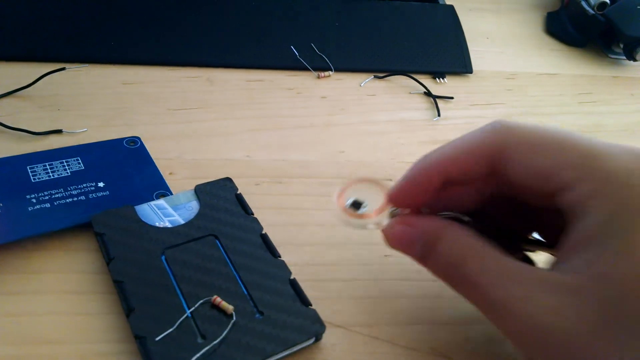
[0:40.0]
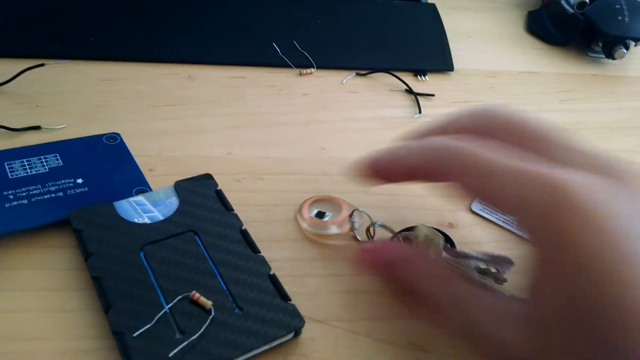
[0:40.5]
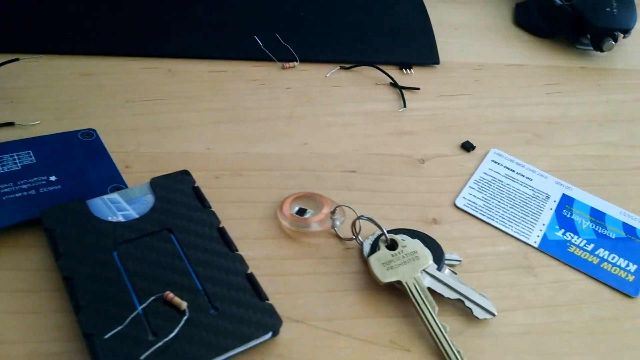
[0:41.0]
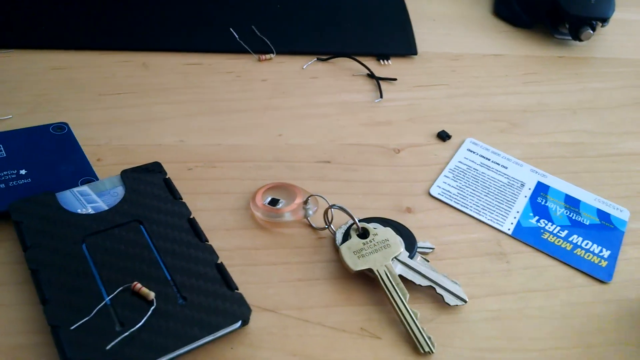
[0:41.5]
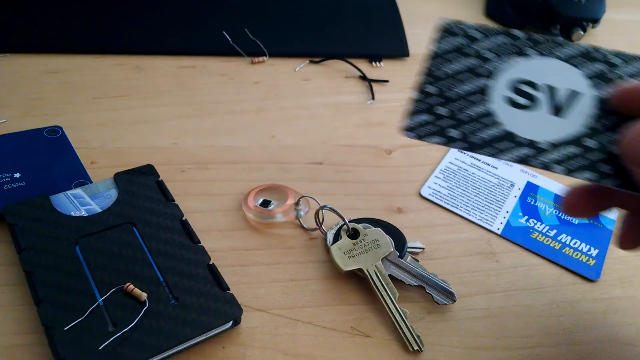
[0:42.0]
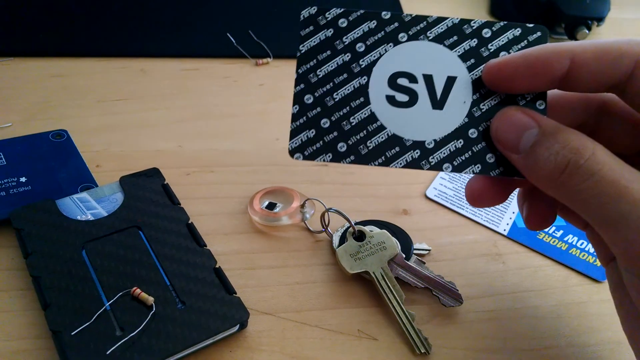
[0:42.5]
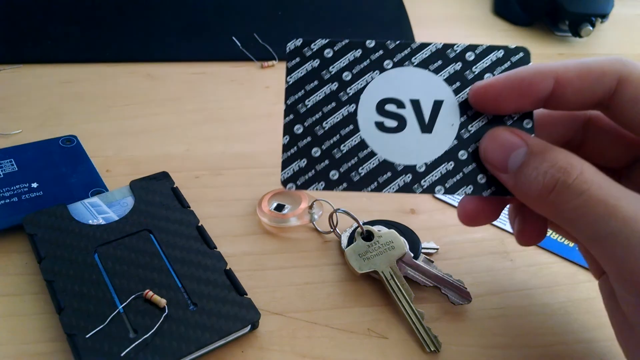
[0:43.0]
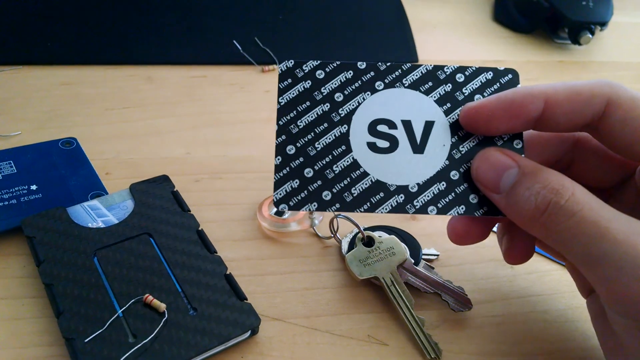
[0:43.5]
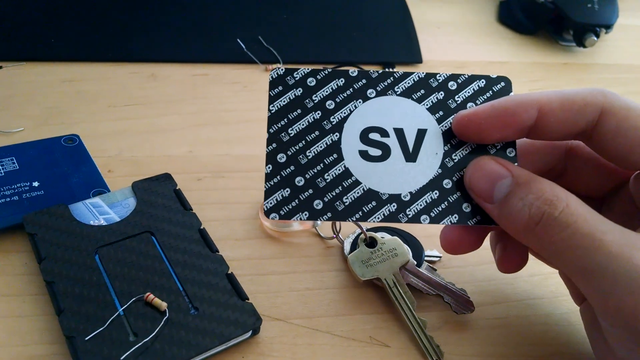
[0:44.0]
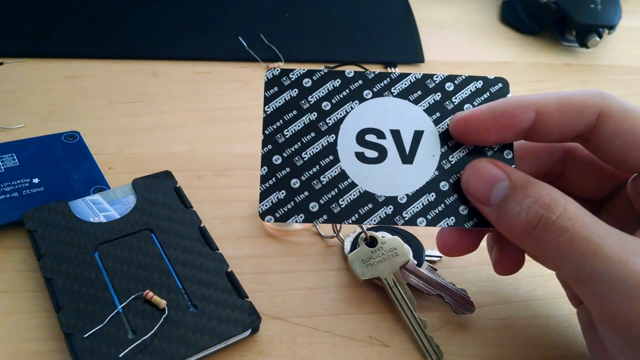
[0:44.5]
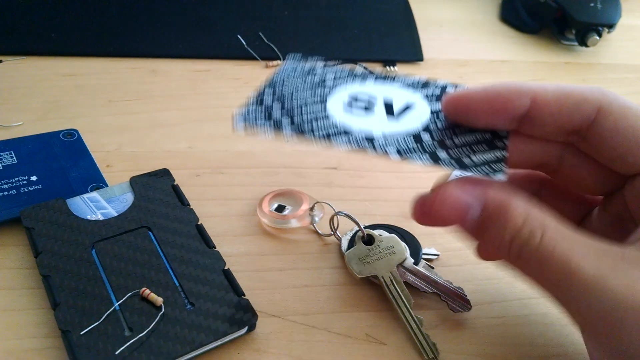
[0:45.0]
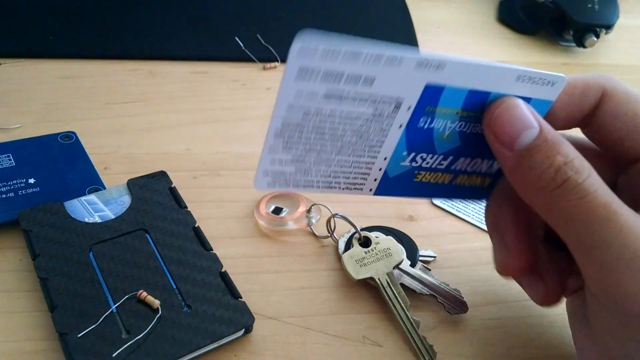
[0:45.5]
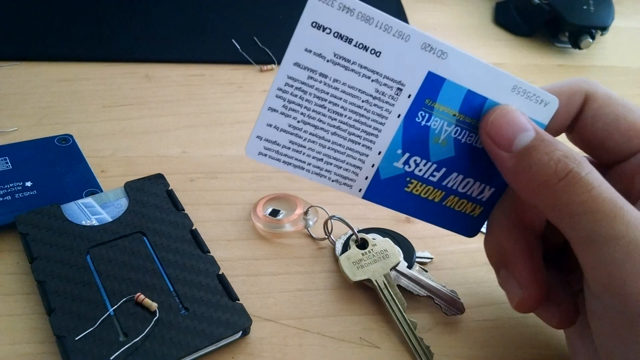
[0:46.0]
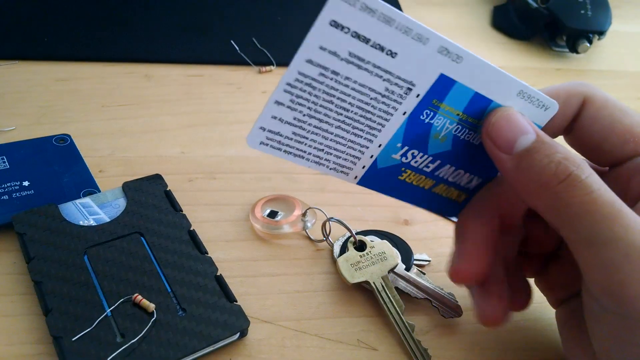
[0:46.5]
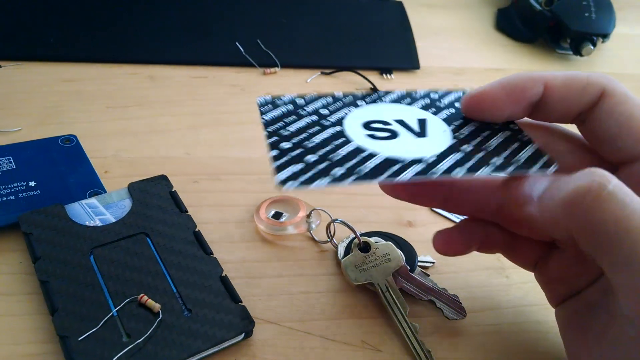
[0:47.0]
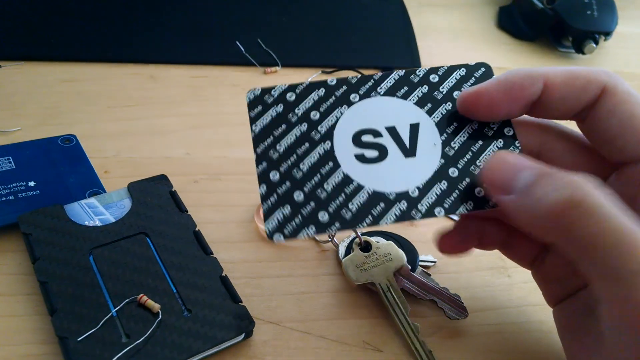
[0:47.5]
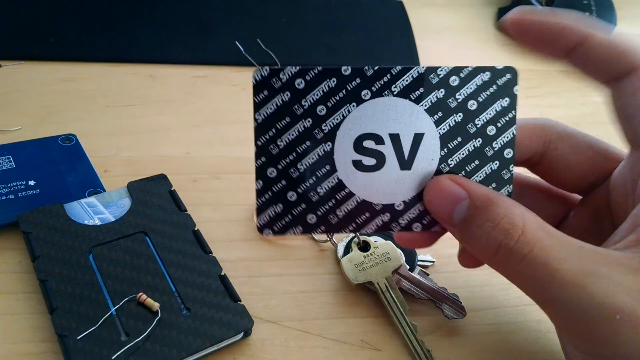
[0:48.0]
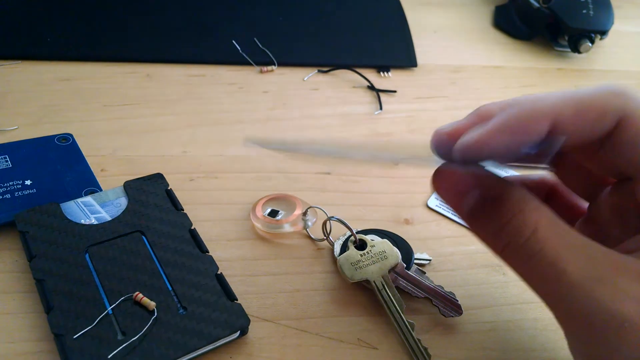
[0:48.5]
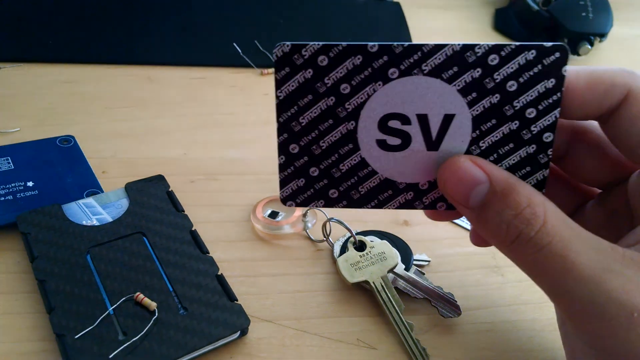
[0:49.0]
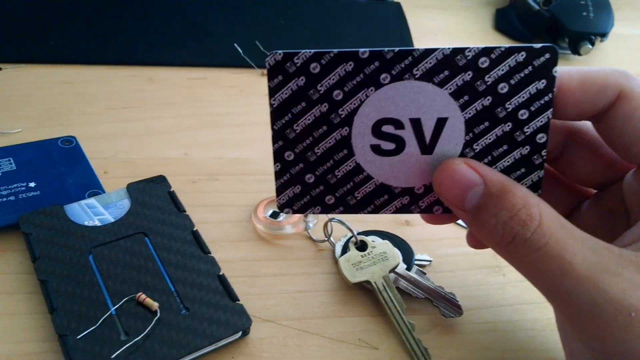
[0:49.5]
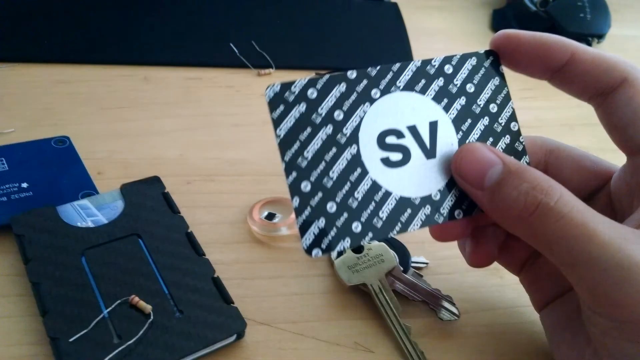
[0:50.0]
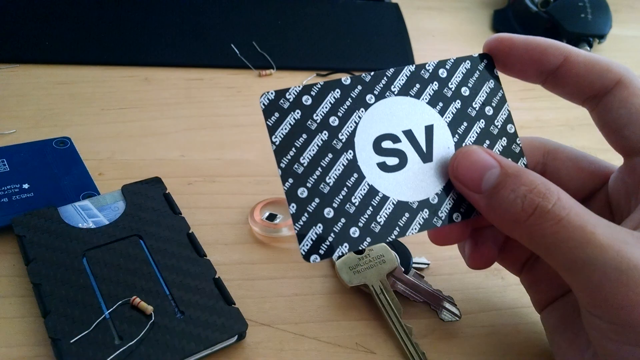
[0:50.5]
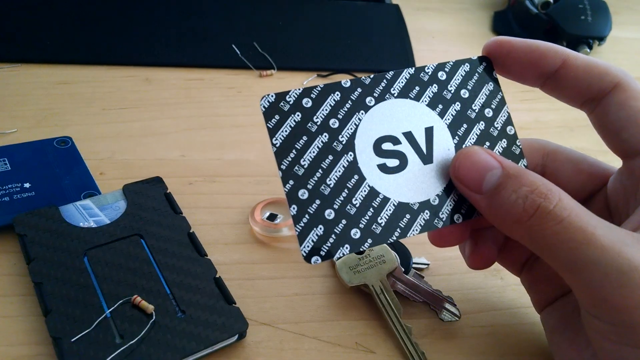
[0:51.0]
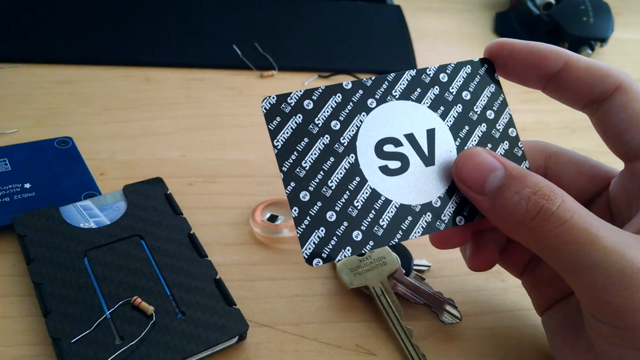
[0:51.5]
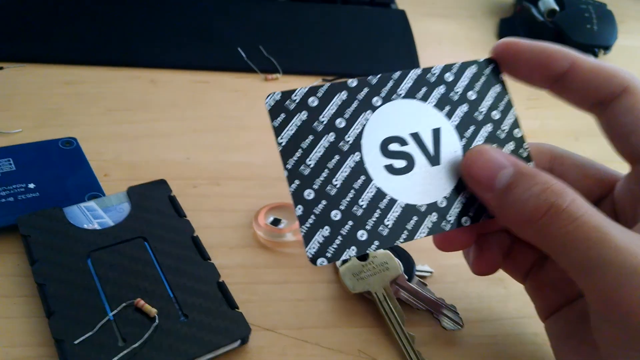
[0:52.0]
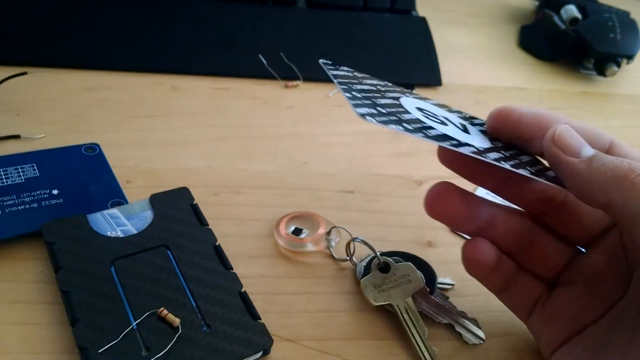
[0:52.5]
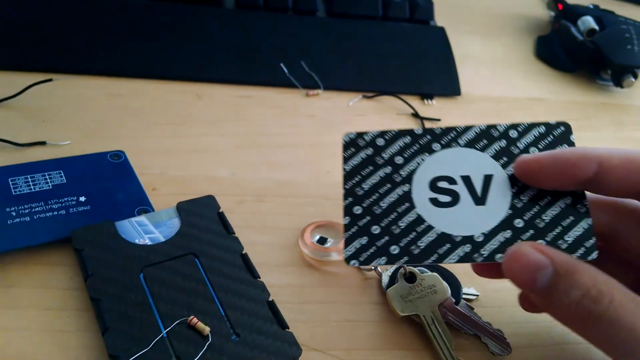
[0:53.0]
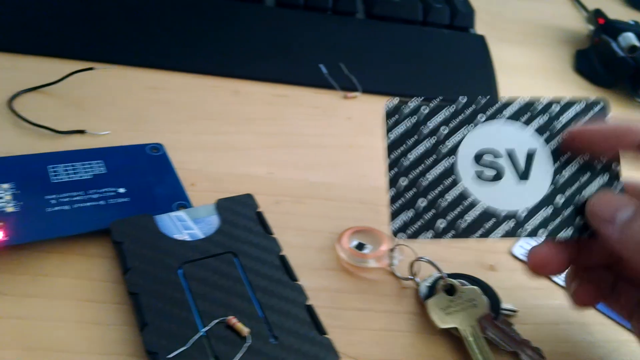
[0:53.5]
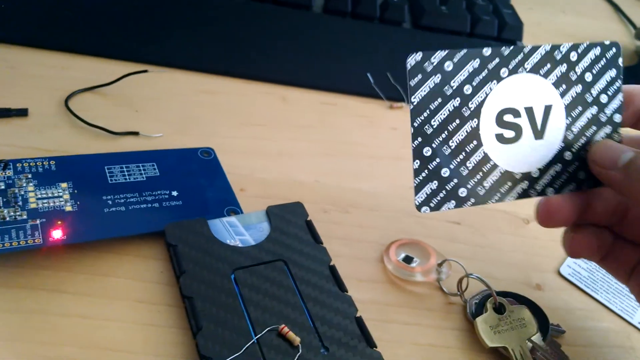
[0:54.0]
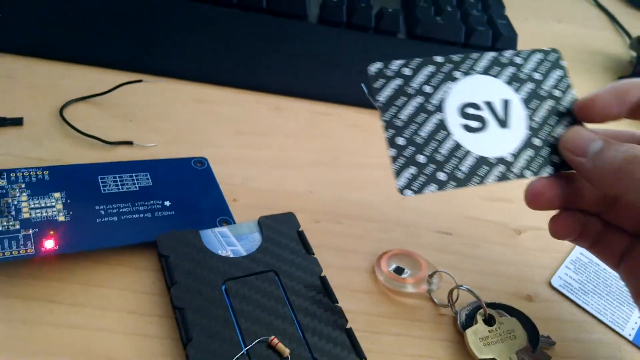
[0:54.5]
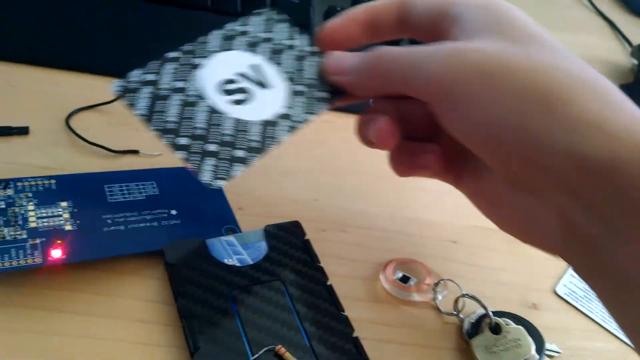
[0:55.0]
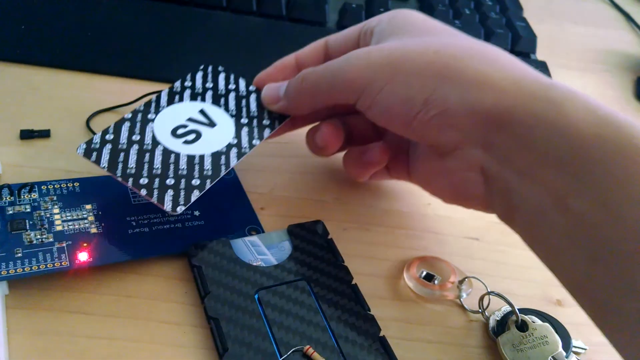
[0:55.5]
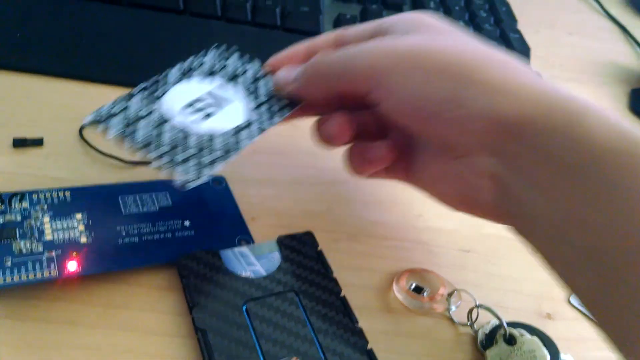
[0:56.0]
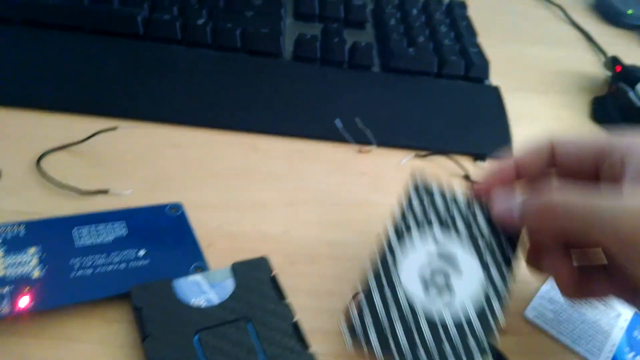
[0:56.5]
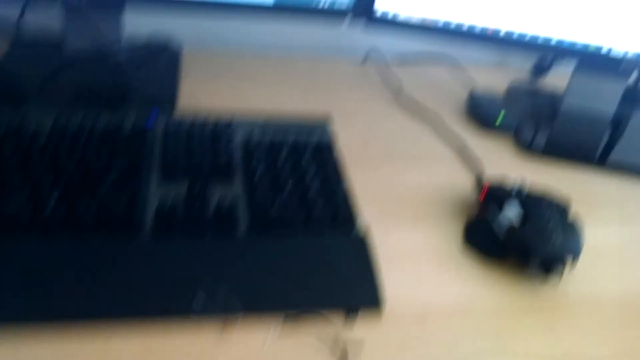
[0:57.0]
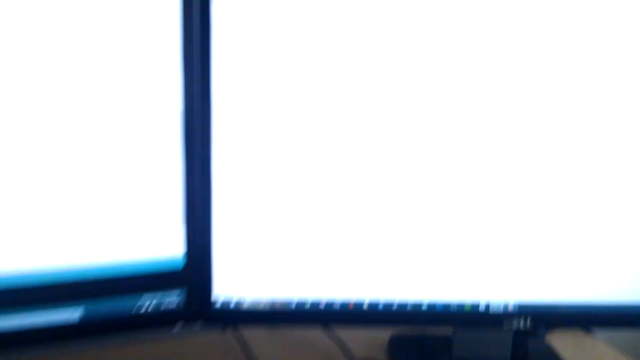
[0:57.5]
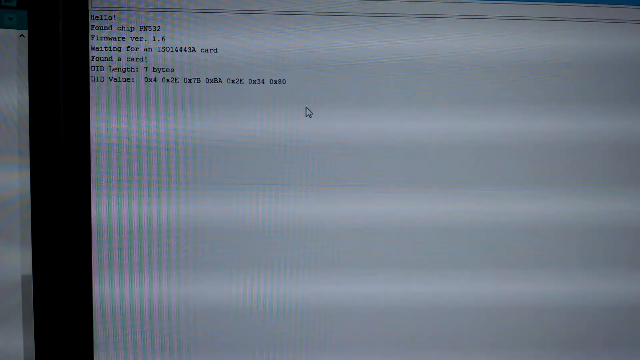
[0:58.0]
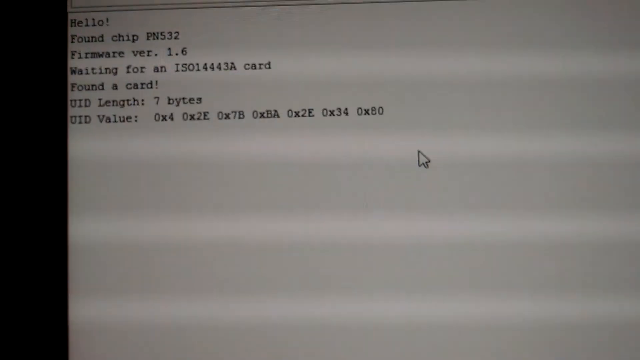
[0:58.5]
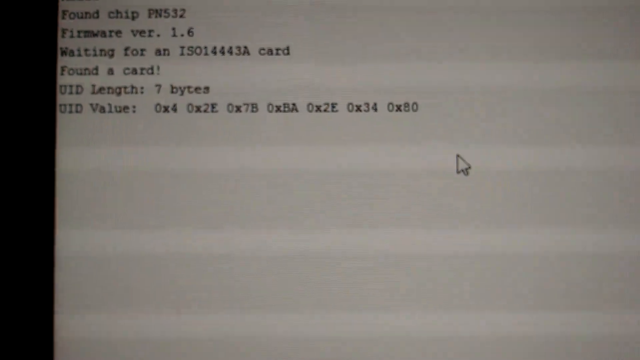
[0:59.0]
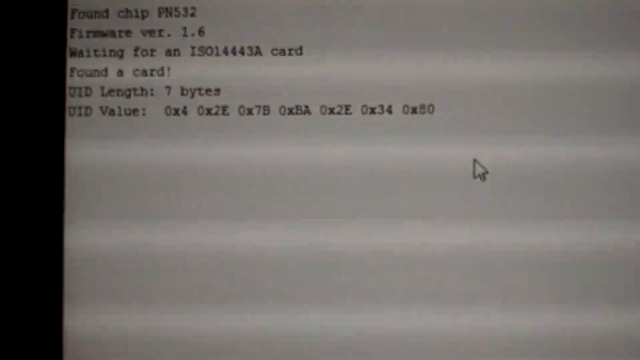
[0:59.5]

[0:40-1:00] The person puts down the keys and picks up a credit card with a giant SV logo on the front; the SV is black with a white circle behind it, and a repeated pattern in the background says "smart trip". They flip the card over repeatedly, showing the back, which has a white background with some text on the right side and what looks like an advertisement on the left. They only look at the card and then put it down without doing anything else with it.